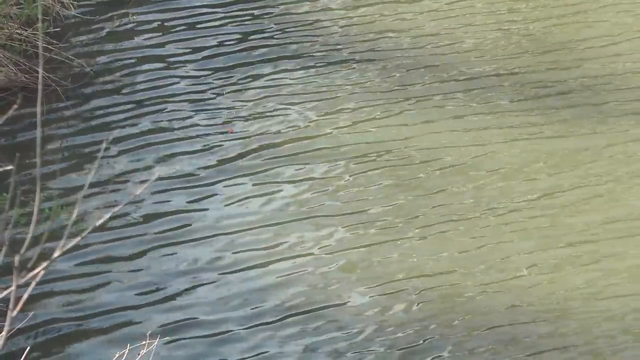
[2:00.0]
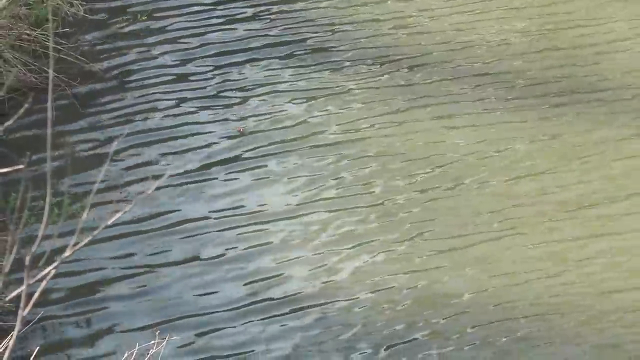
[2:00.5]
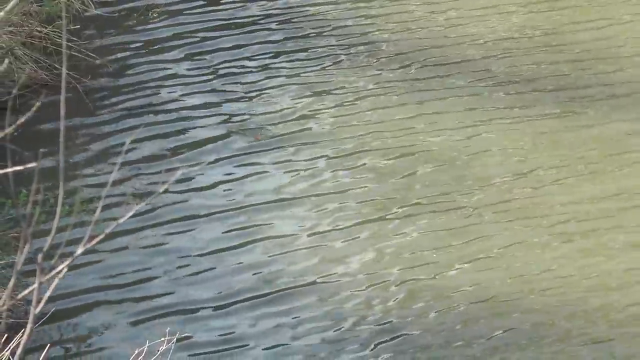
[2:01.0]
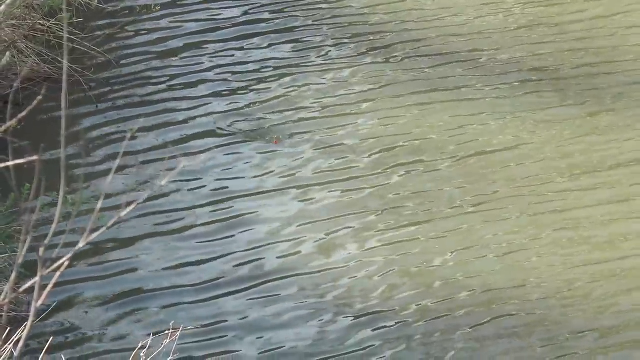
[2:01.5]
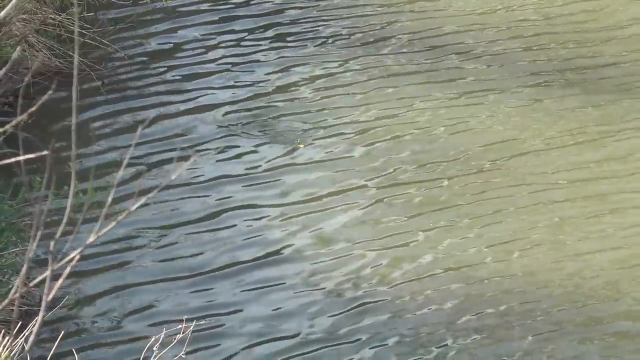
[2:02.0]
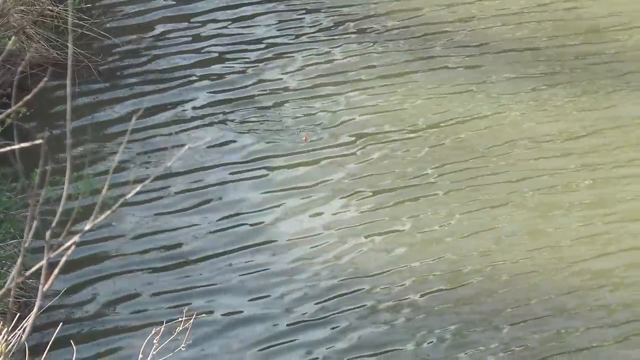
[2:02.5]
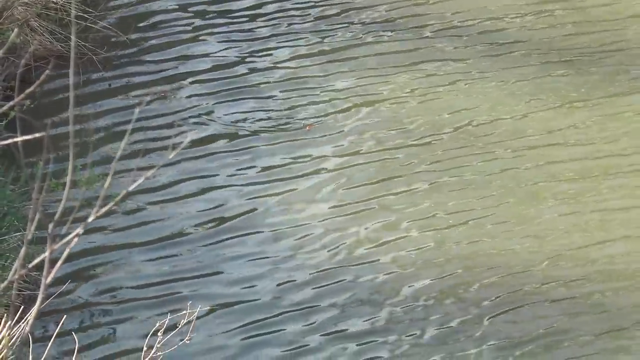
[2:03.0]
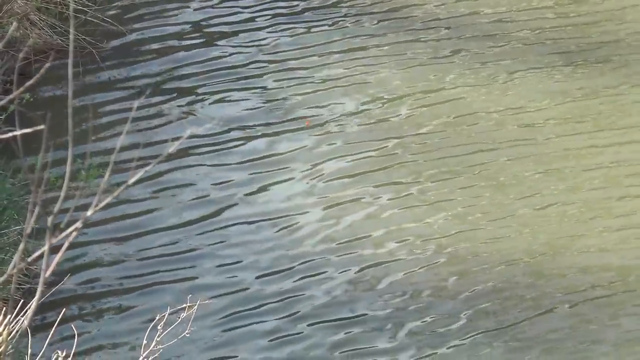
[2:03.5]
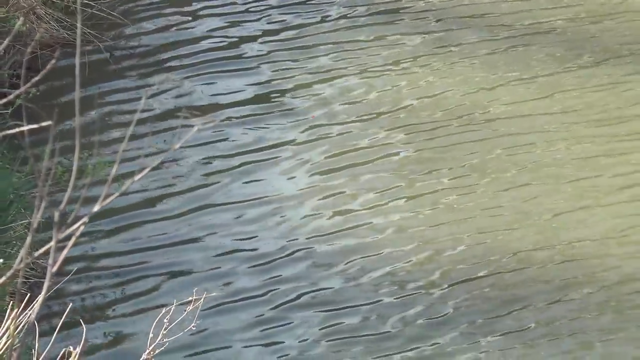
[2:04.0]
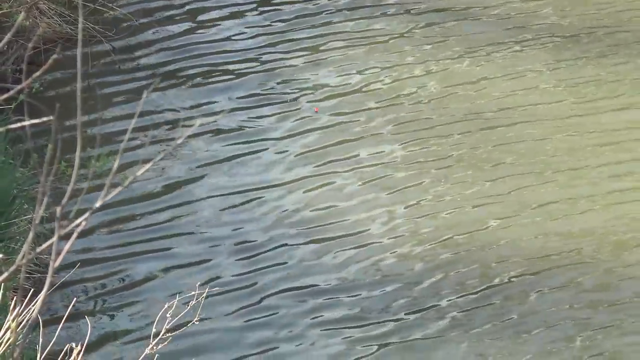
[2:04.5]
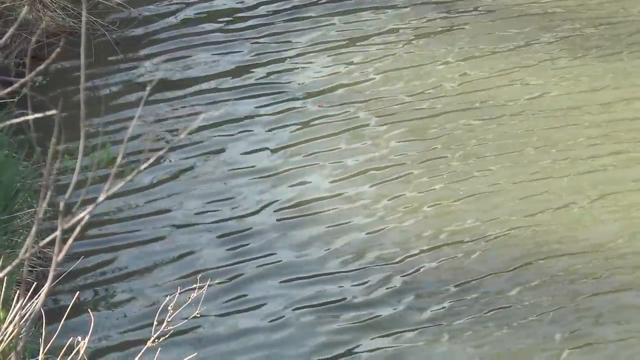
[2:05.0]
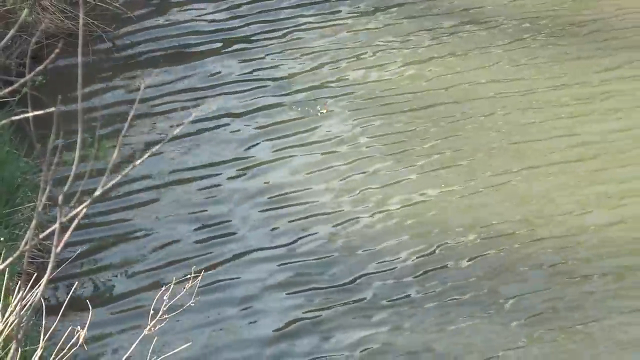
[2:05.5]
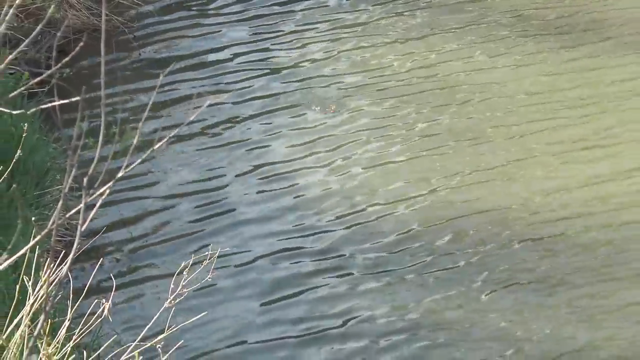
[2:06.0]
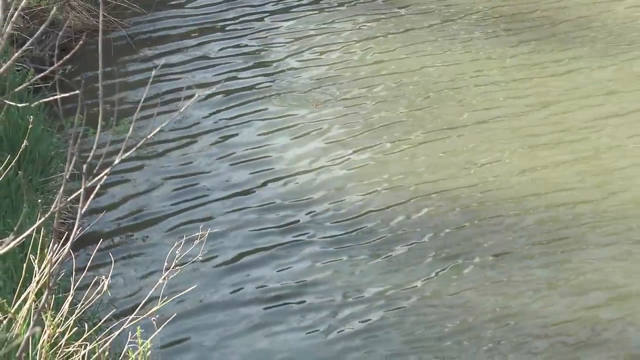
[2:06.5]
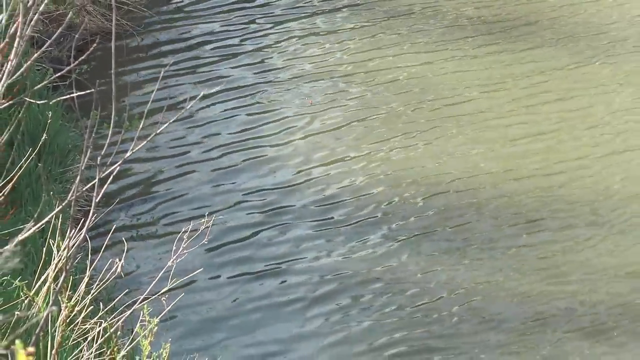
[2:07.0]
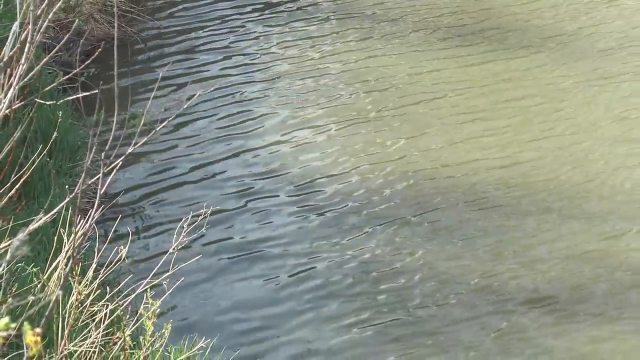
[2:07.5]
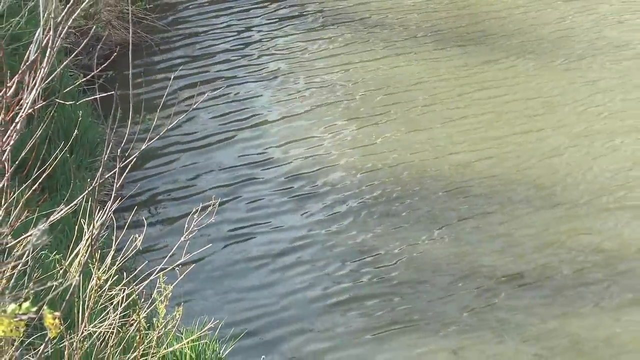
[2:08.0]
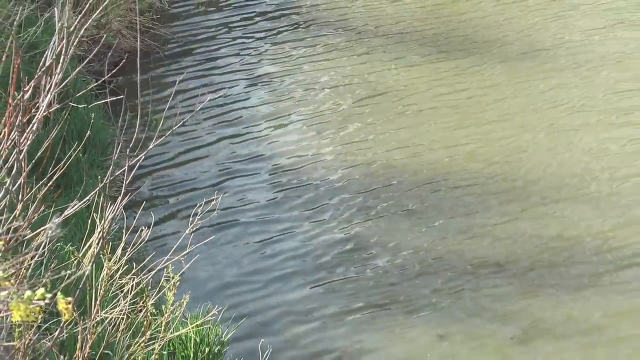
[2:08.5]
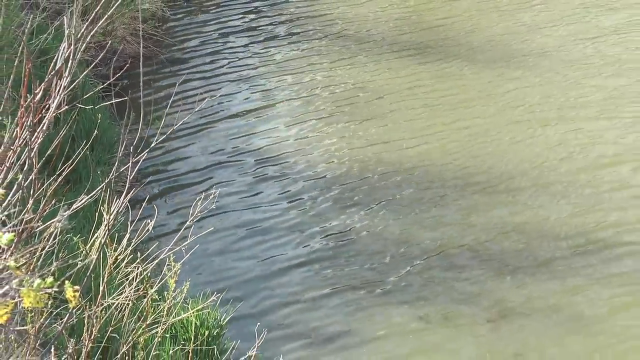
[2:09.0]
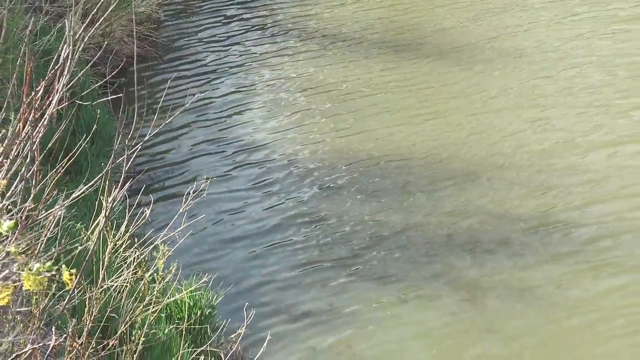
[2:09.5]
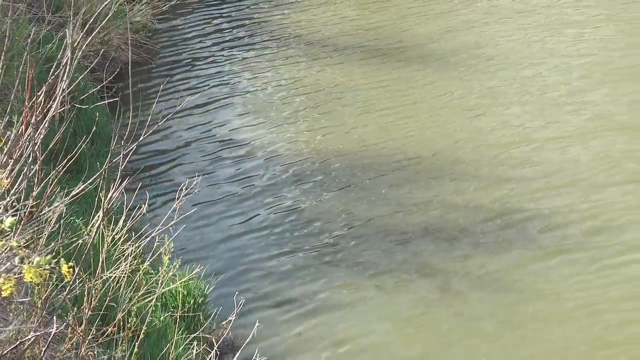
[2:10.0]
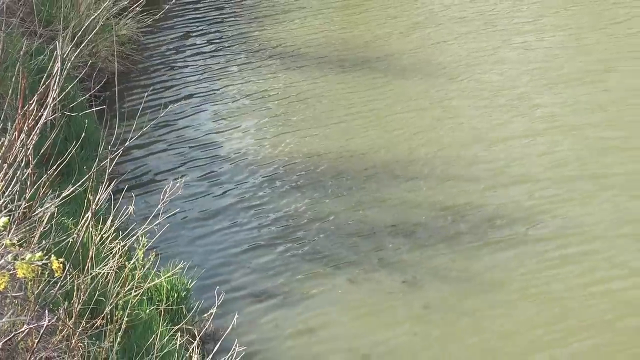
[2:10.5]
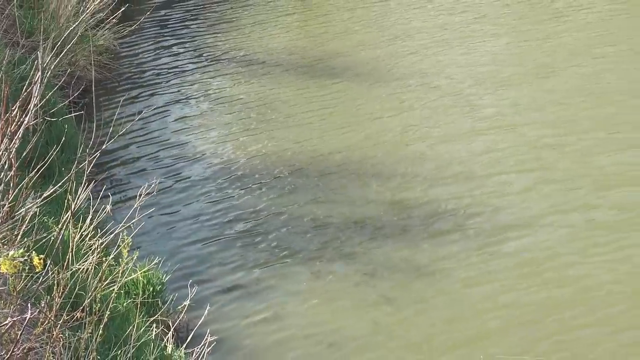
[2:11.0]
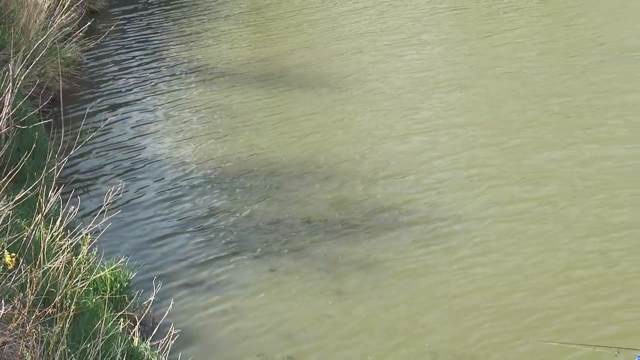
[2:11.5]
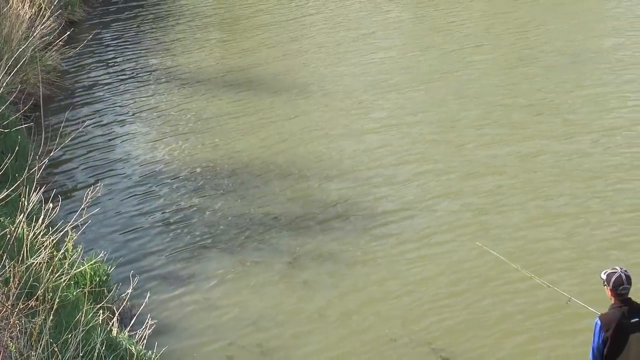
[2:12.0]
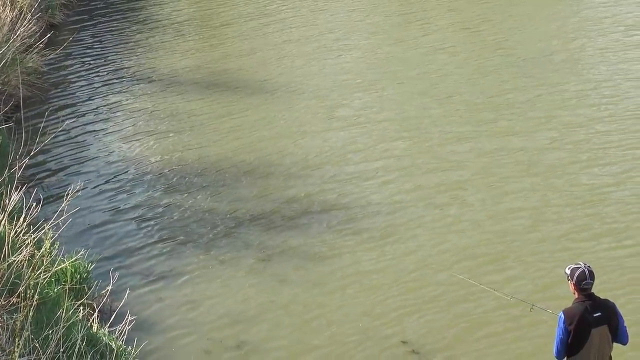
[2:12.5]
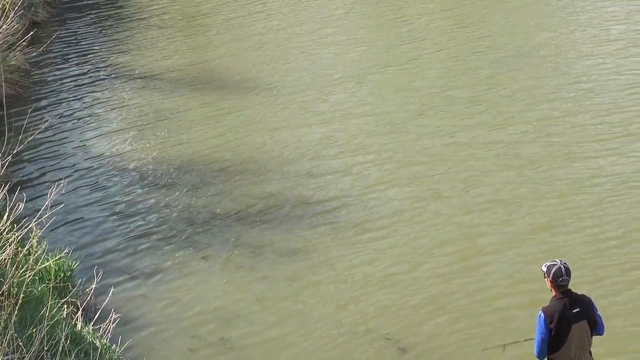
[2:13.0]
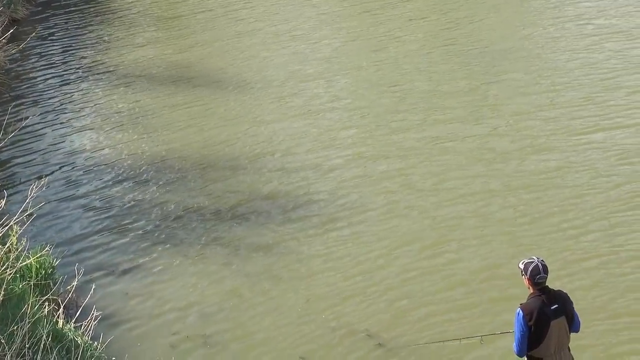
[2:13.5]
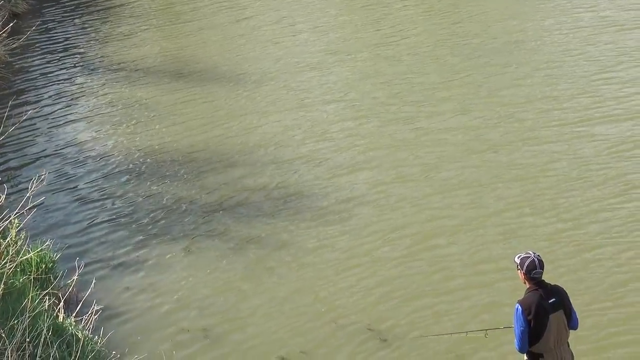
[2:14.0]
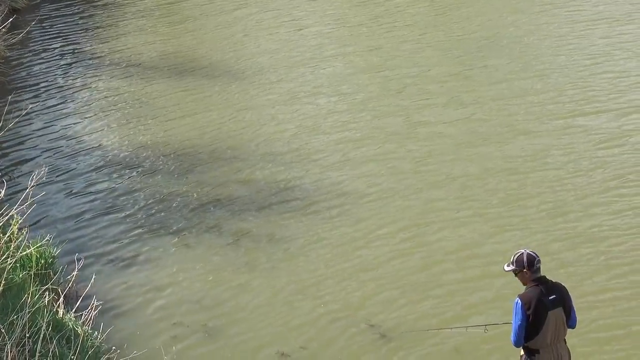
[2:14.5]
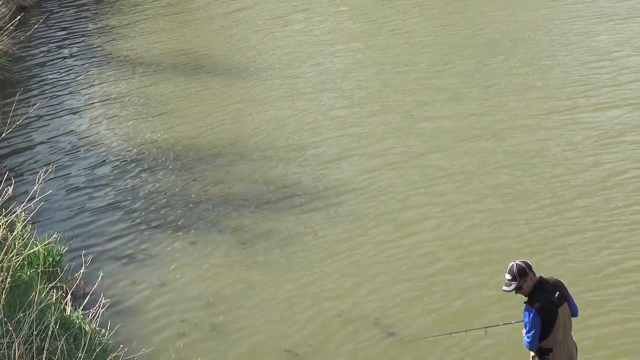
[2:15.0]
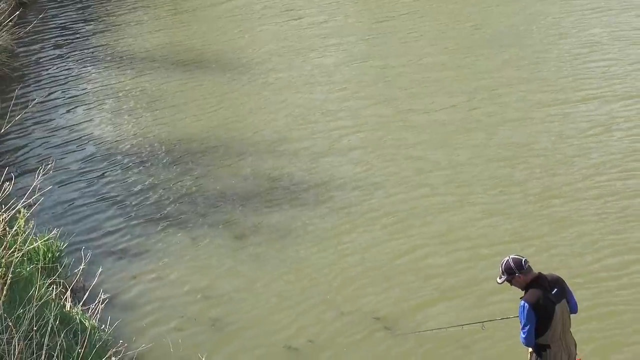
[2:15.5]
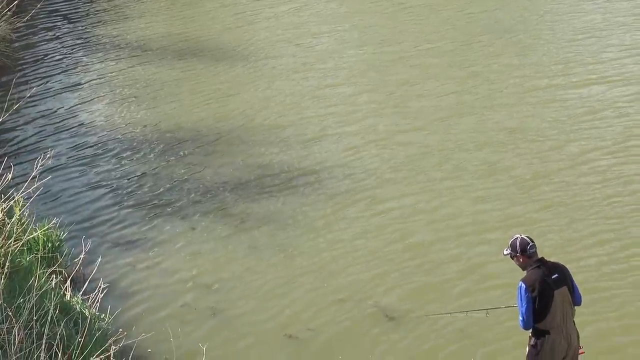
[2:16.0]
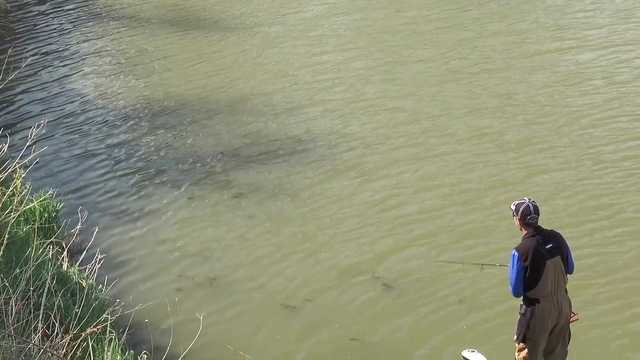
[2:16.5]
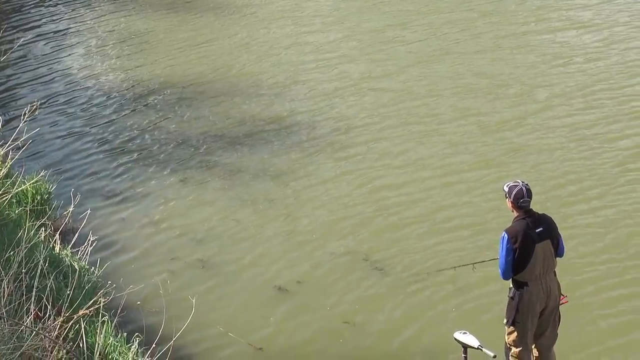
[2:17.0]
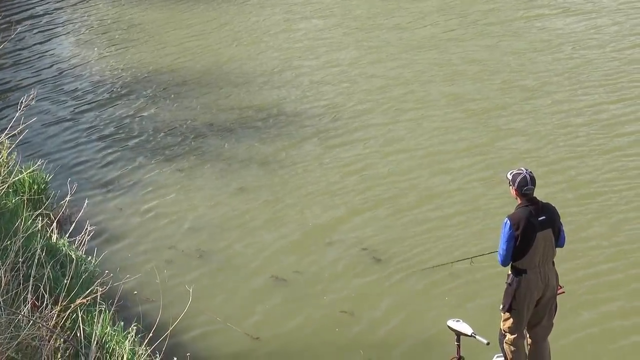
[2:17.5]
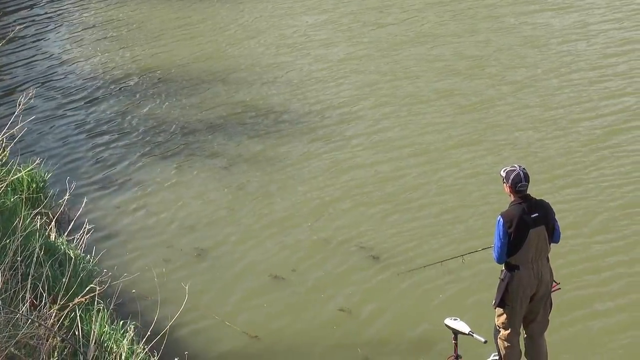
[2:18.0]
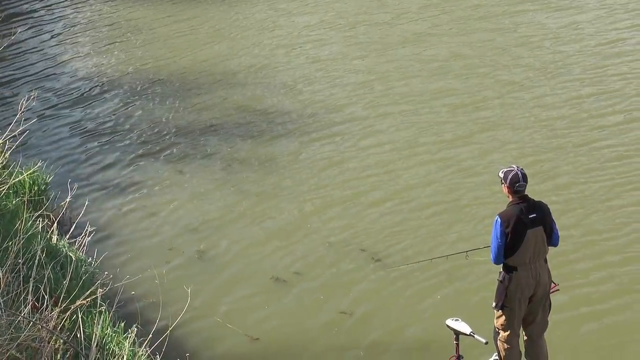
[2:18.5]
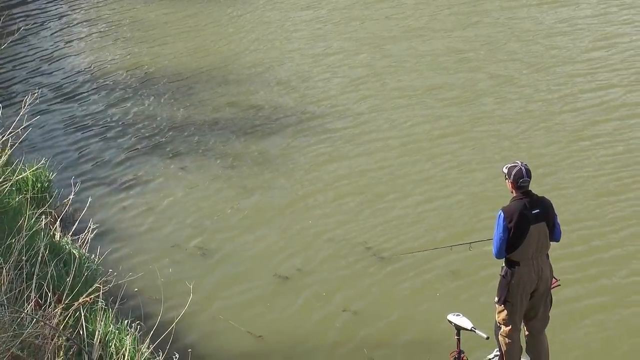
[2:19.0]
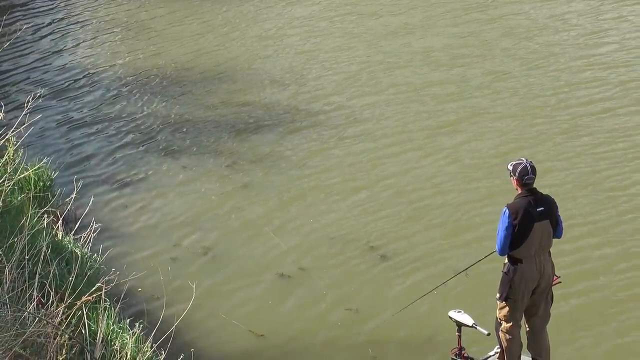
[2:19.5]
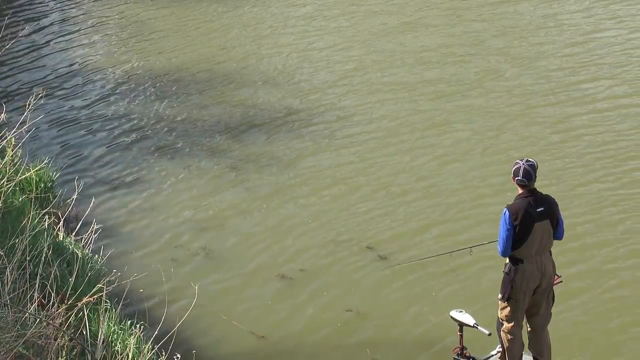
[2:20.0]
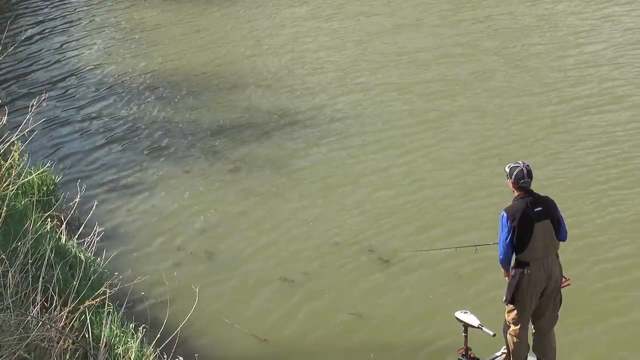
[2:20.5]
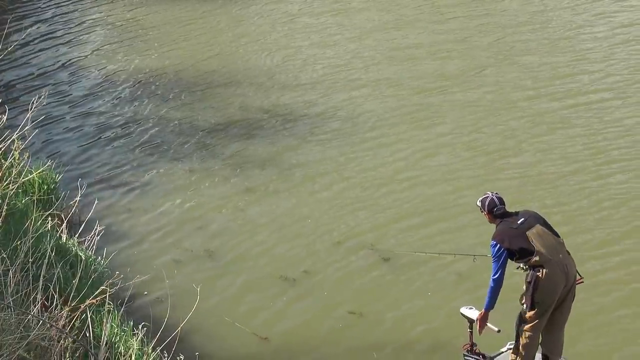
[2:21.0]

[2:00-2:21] Having cast his line out a second time, the fisherman is in the same waters as before, but his boat is now right next to the shoreline. He reaches for the motor to steer and jerks his fishing pole a little, maybe to give the lure in the water some play. Ripples spread across the green water, with a little green and dried brush off on the lower left of the screen. The foliage is hard to make out, but some of the trees and limbs cast shadows over the water.